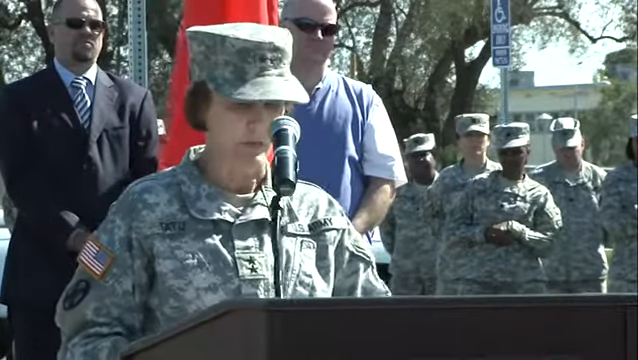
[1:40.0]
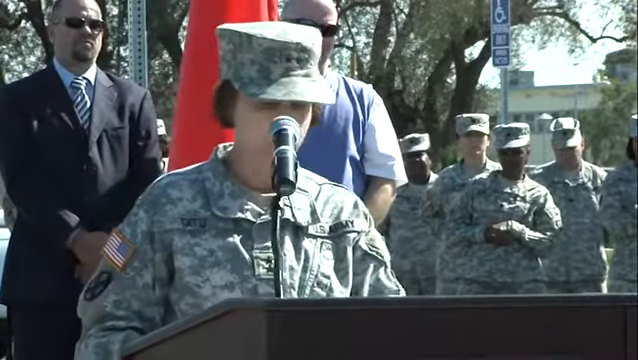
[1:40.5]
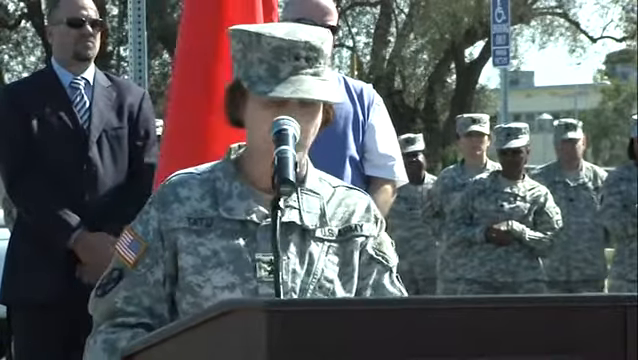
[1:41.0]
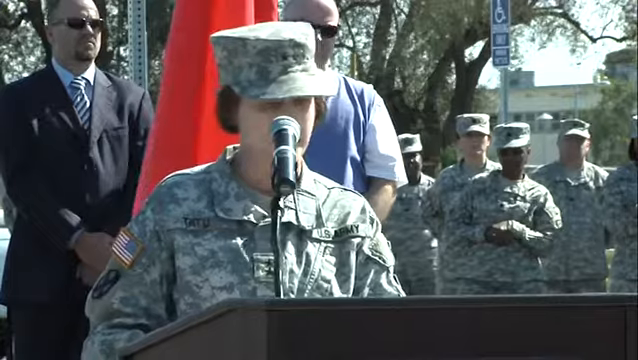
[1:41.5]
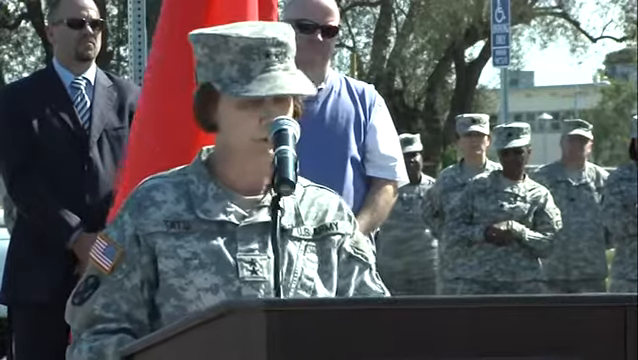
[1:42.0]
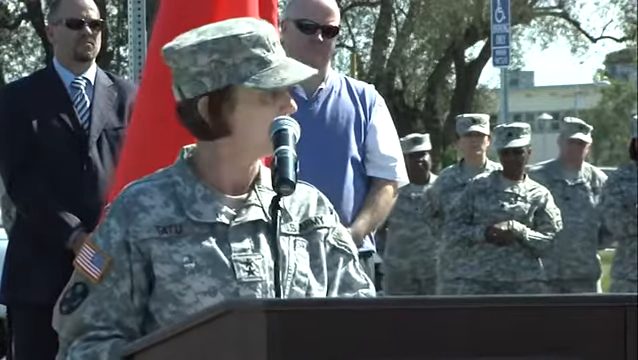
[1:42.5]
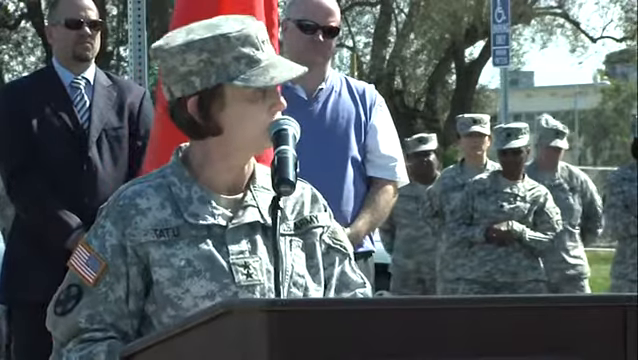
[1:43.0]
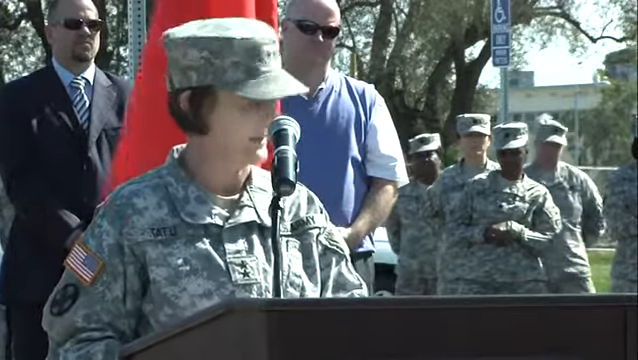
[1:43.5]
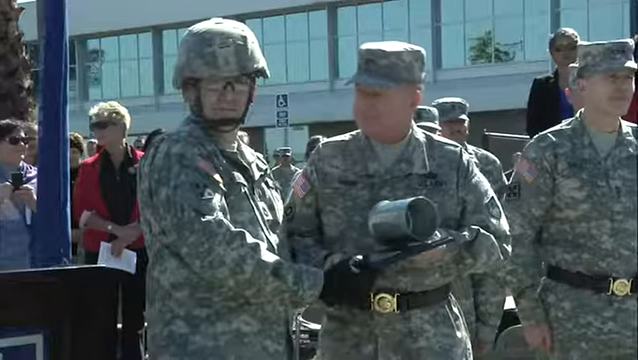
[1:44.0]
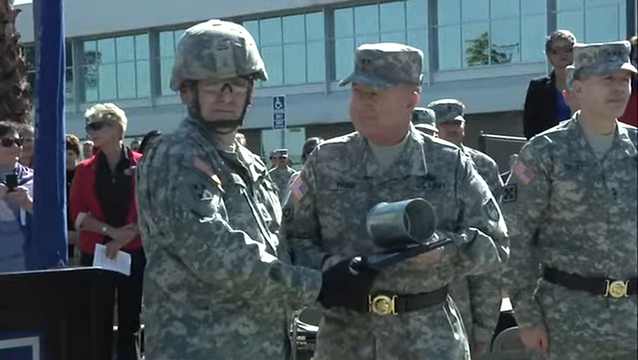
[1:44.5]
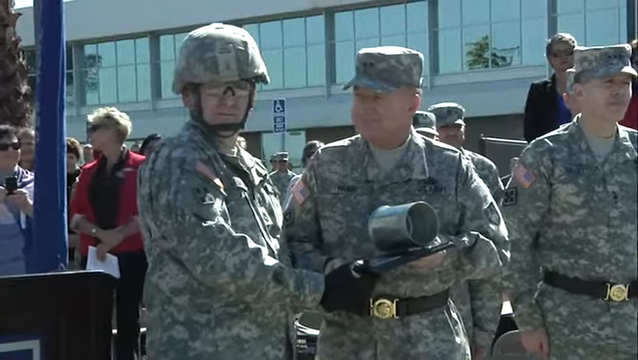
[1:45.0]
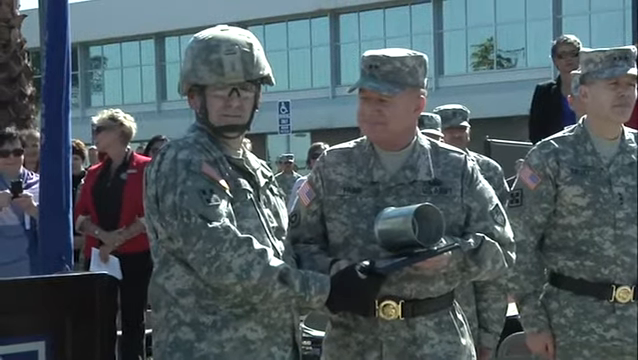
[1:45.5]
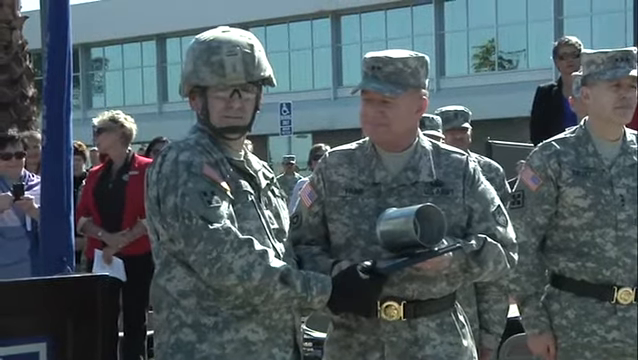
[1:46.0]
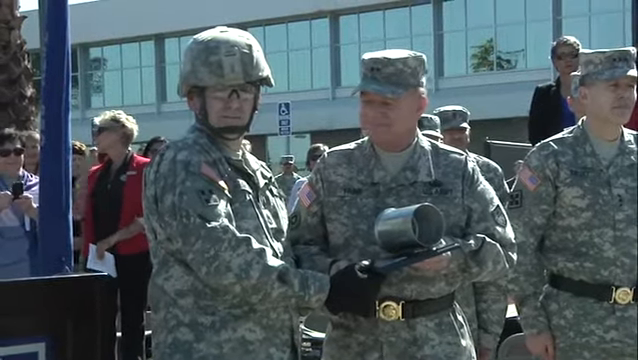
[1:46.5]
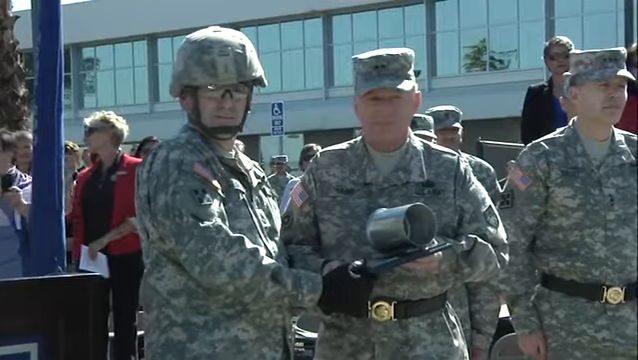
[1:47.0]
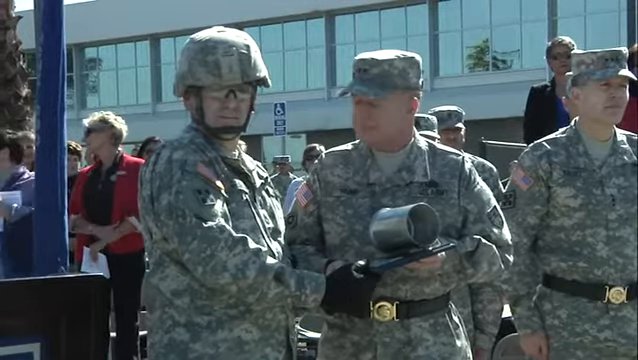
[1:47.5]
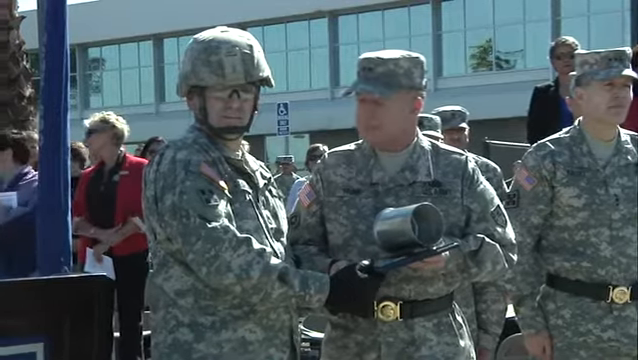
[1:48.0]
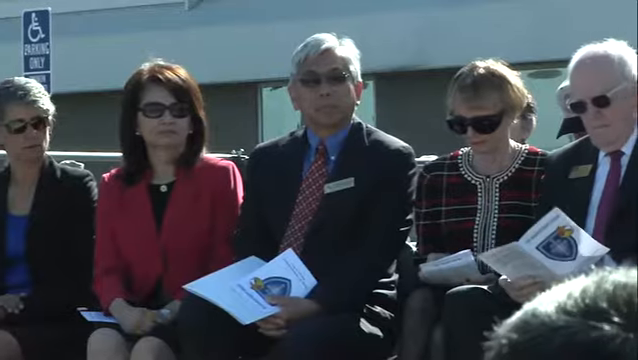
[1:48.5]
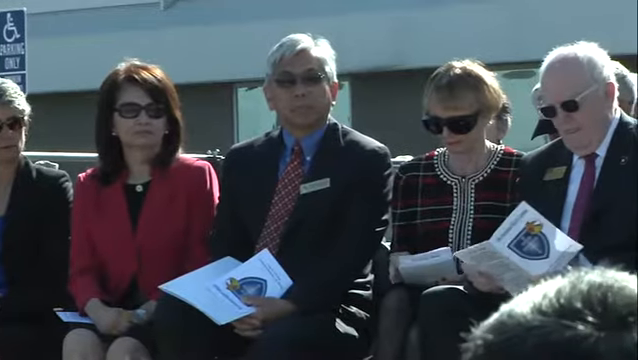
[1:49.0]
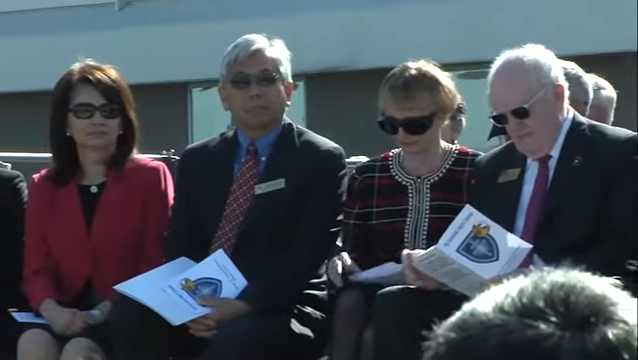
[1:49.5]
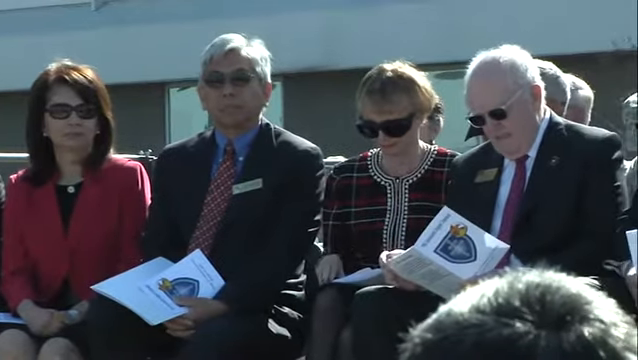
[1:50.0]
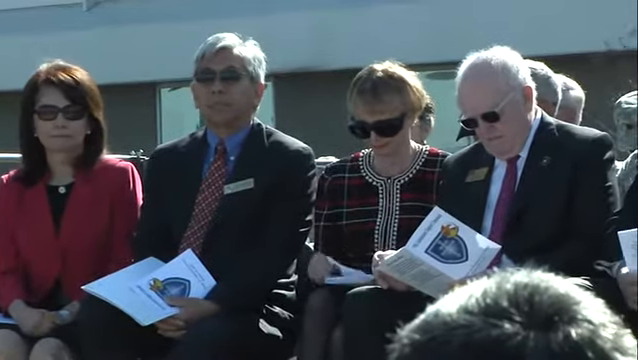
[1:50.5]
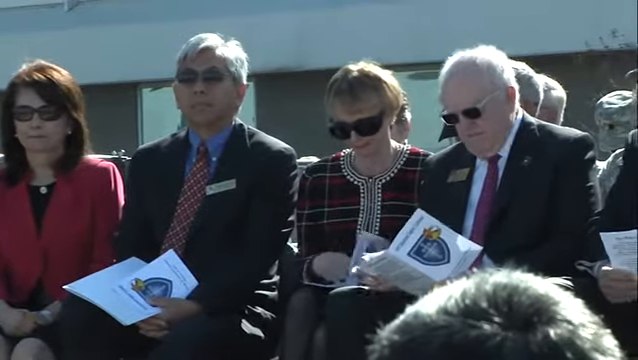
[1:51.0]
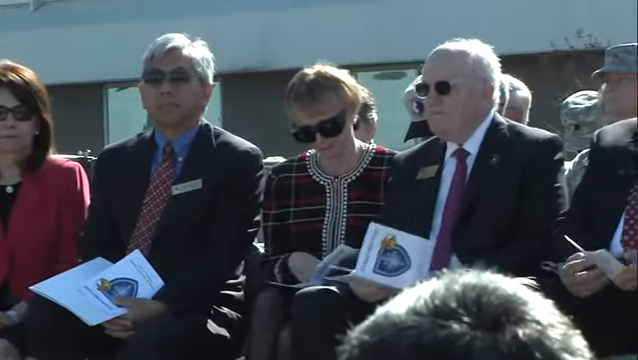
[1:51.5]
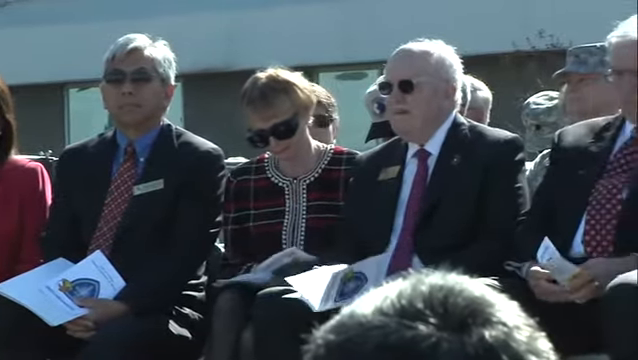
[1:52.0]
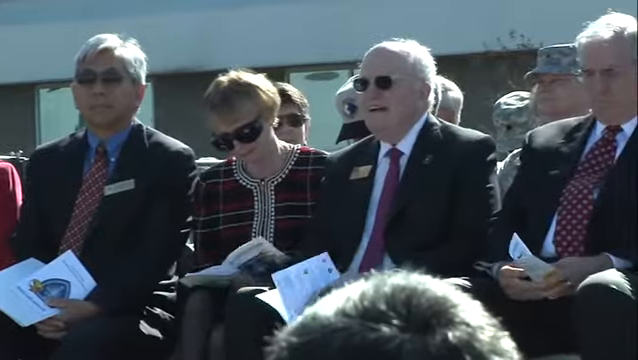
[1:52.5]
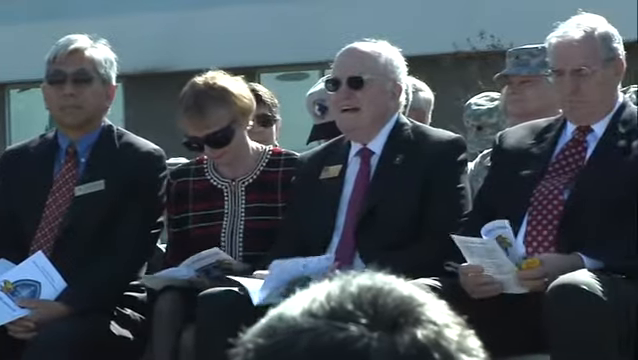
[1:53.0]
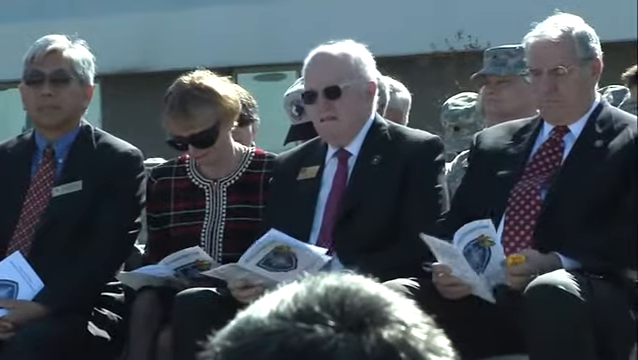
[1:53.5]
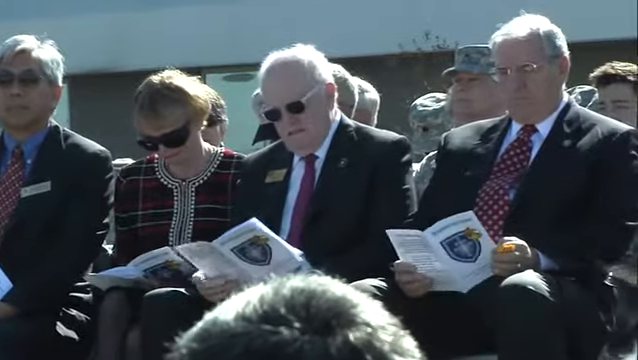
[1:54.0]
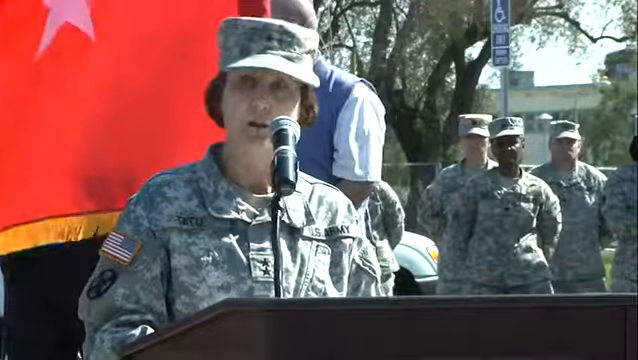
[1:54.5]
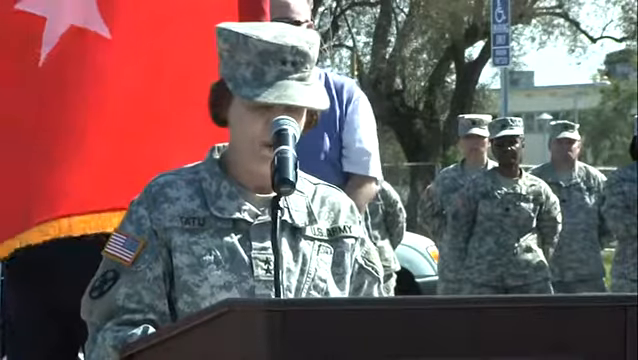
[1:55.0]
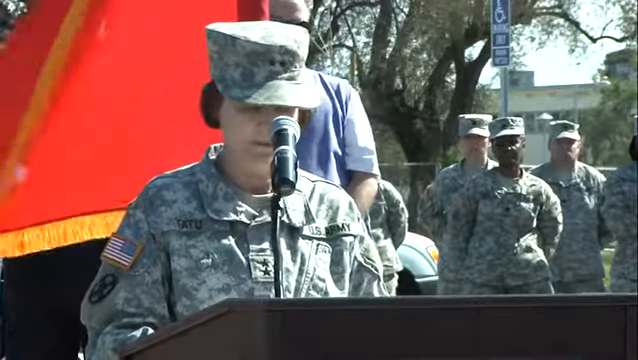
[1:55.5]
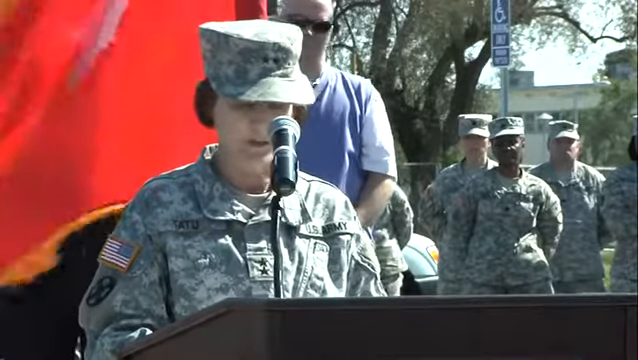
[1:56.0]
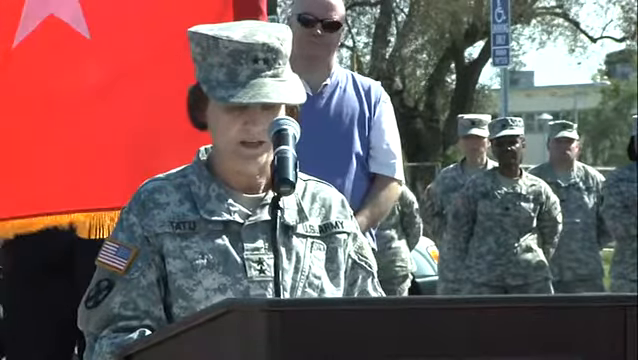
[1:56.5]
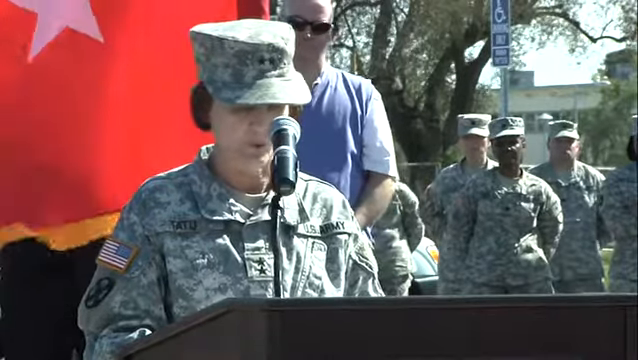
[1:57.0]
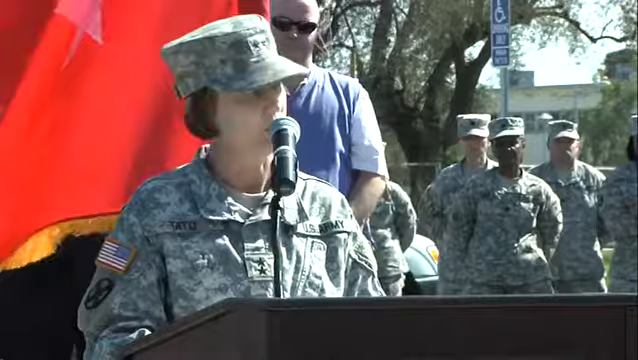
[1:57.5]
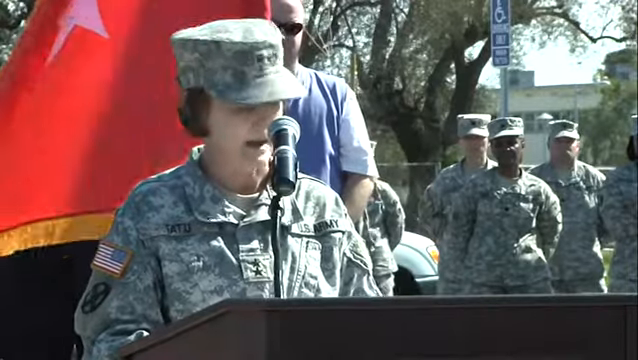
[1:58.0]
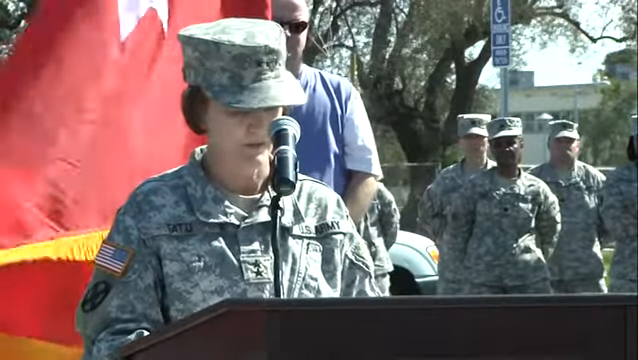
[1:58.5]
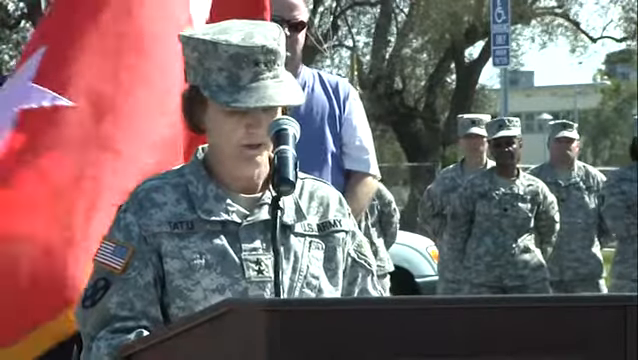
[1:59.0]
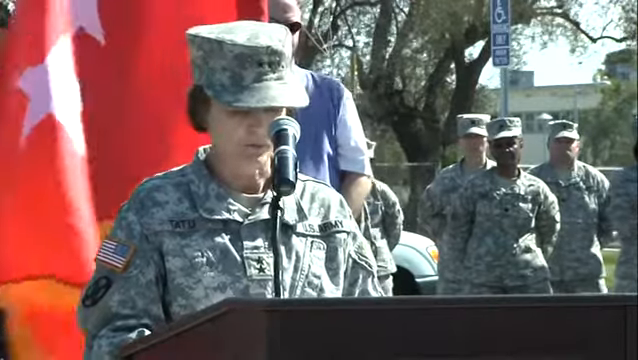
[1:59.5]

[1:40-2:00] A woman stands at a podium with a microphone on it, wearing a camouflage military uniform and a camouflage hat with two stars on the front. Behind her is a small stage with a red flag hanging on a flag post; it is not blowing, so only its red color is visible. Behind the flag is a man in a black suit, white shirt, striped tie and sunglasses. Over her left shoulder behind her is a man in a short-sleeved blue shirt and sunglasses, and further back five other people in military uniforms stand listening to her speak. The video cuts to three men in military uniforms standing and looking directly into the camera, with a big building filled with windows in the background. Then a long line of people in ordinary clothes, not soldiers, look at pamphlets in their hands.